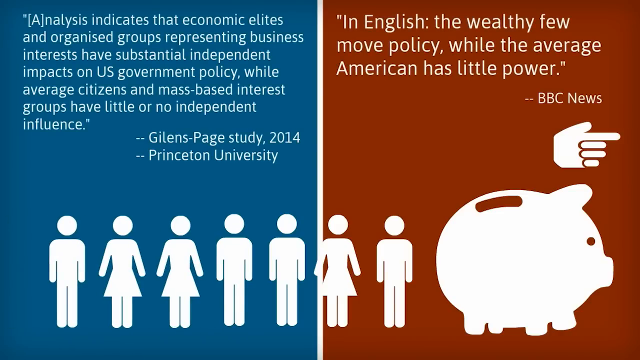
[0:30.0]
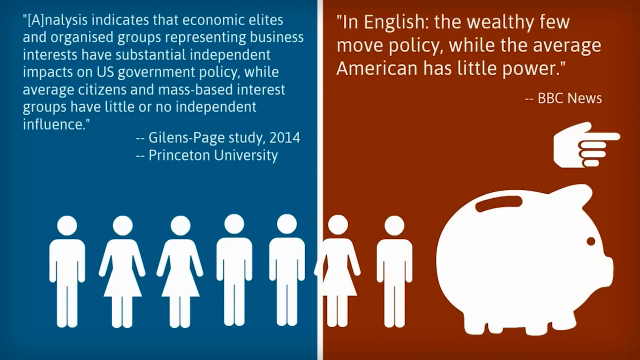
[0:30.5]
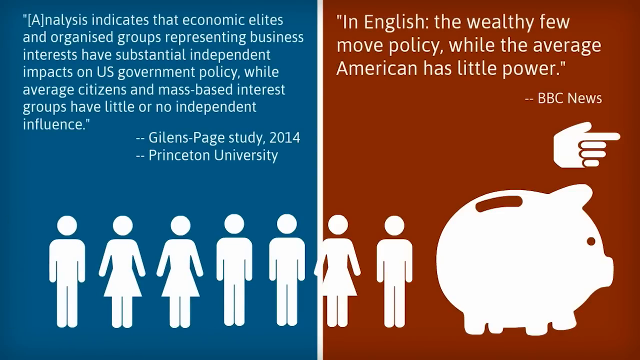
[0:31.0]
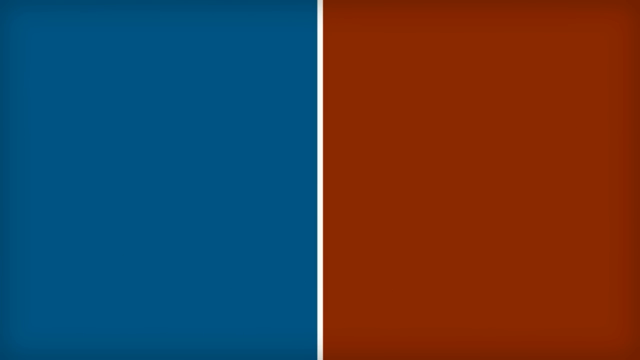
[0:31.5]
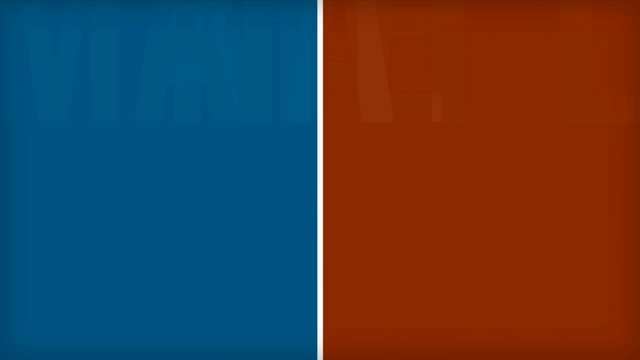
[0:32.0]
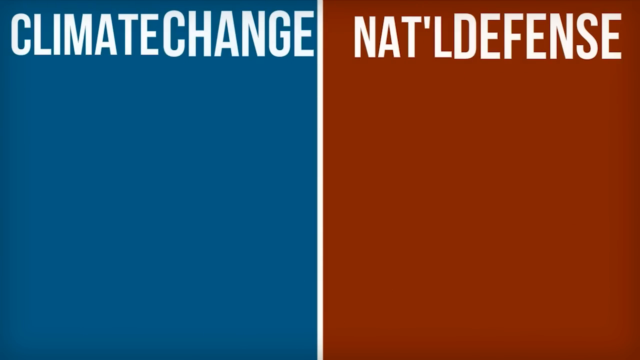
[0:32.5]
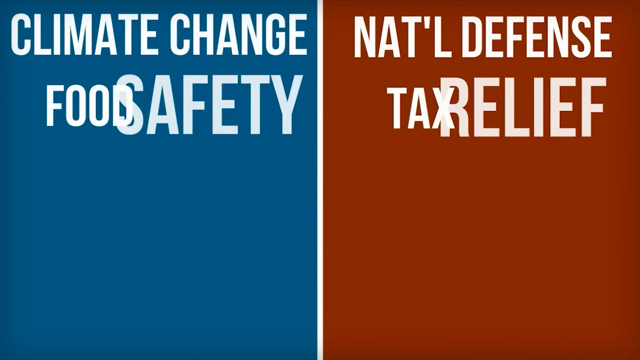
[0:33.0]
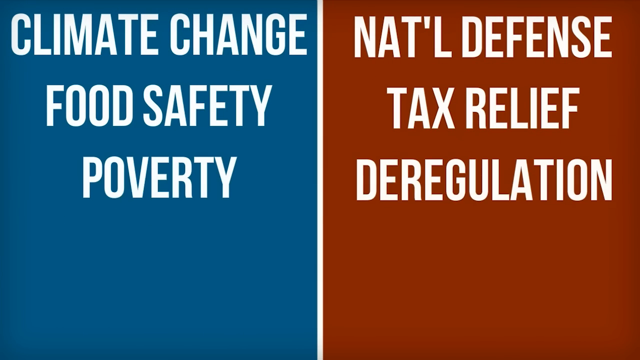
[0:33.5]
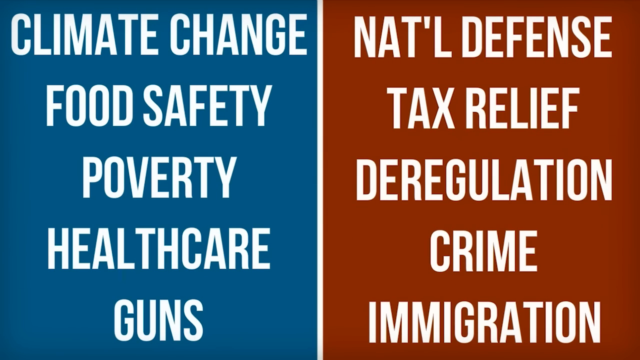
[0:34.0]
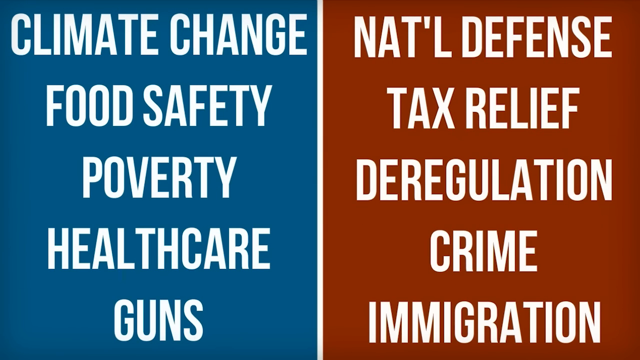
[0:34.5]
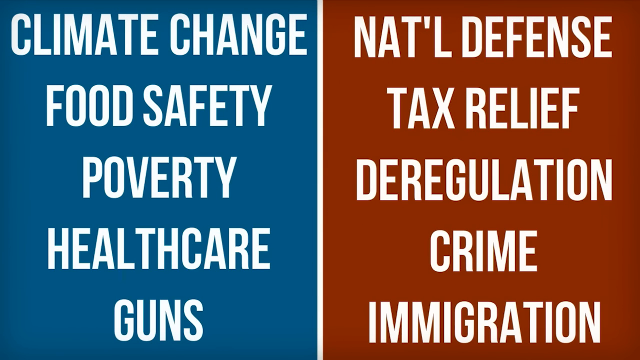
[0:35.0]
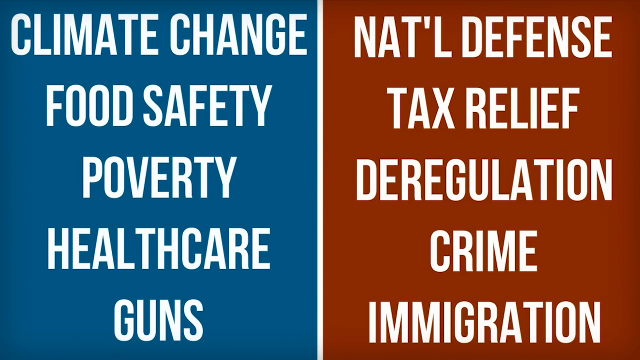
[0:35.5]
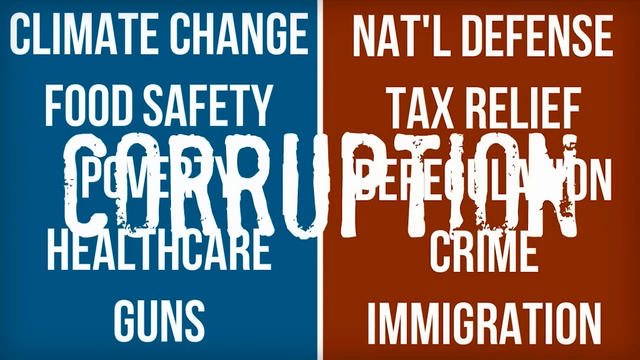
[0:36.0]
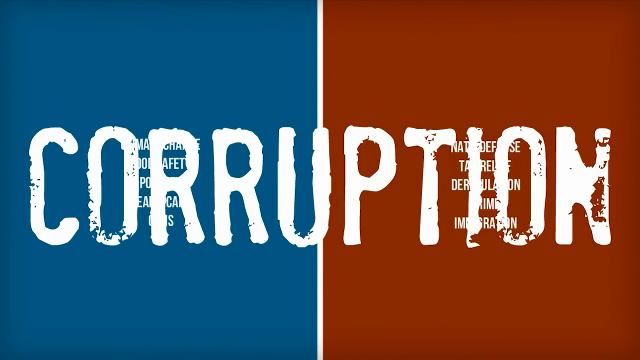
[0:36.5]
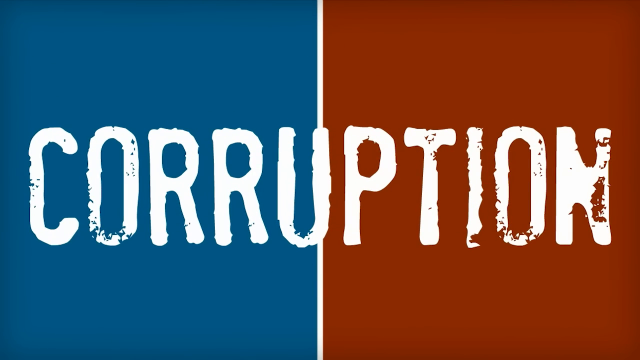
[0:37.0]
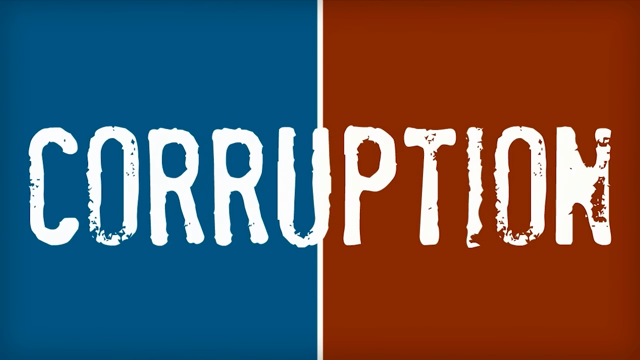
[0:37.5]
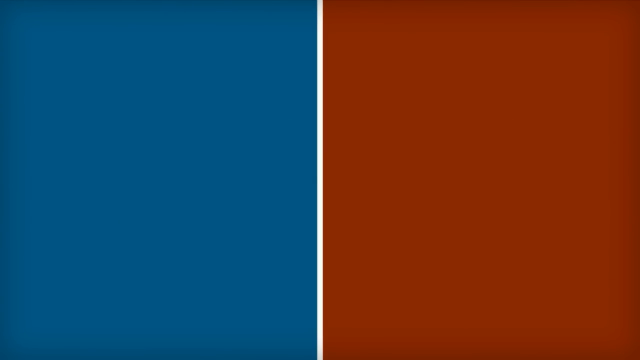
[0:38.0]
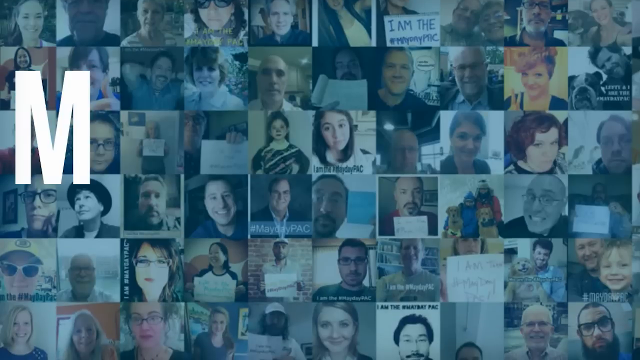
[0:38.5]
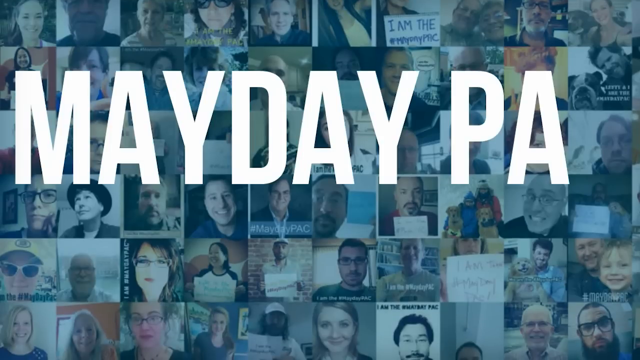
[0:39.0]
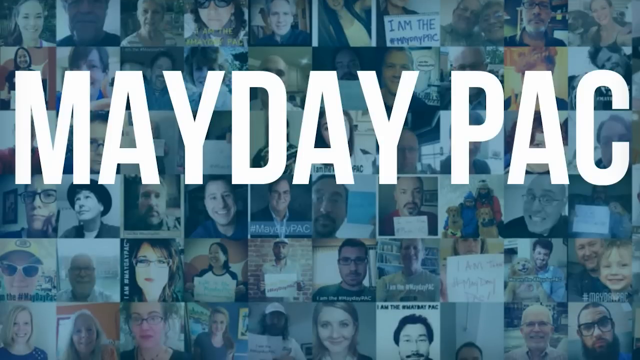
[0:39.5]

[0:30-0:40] The screen is in red and blue. Text reads "analysis indicate that economic elite and organized groups representing businesses interest have substantial independent impact on the USA government policy while average citizens and mass-based interest groups have little or no independent influence," credited to a 2014 study from Princeton University. On the right side, English text says "the wealthy few move policy" and that "the average American have little power," credited to BBC News. Across the red and blue sides, lists of issues appear: climate change, food safety, poverty, health care and guns, with corruption marked as the most important one; another list shows crime, immigration, deregulation, tax relief, defense and corruption. The words "mayday" and "Mayday PAC" appear.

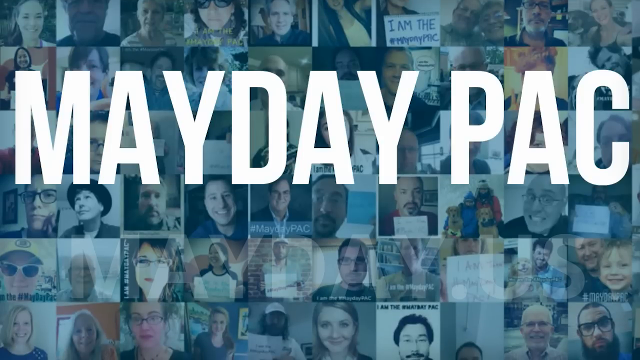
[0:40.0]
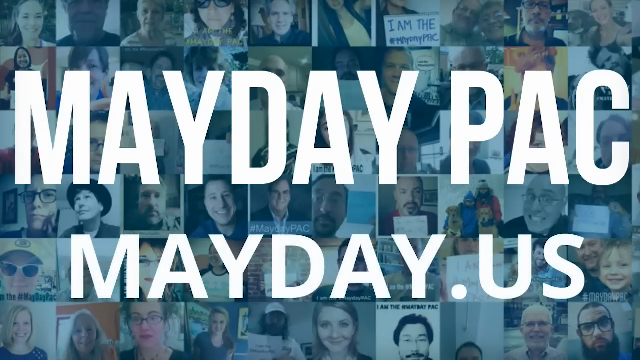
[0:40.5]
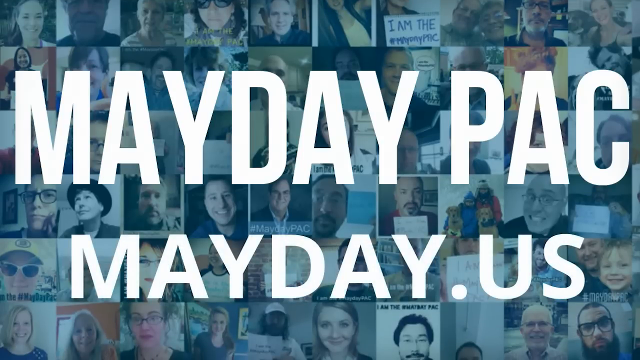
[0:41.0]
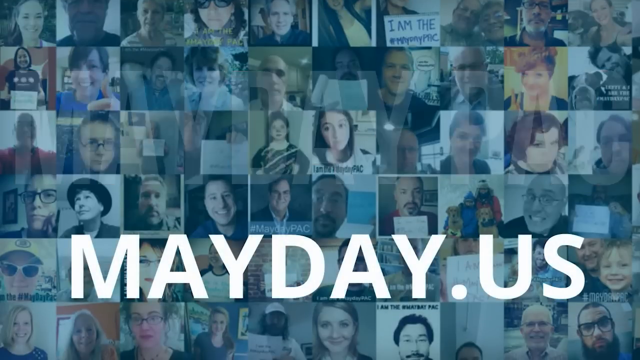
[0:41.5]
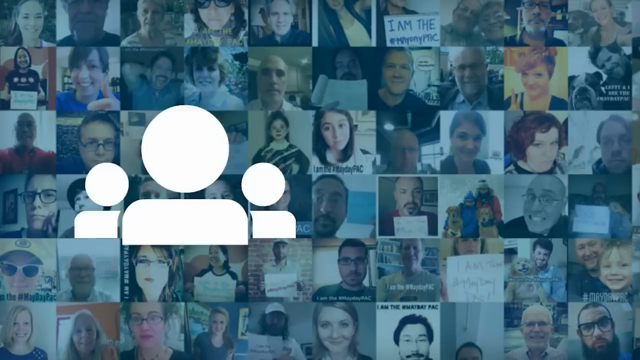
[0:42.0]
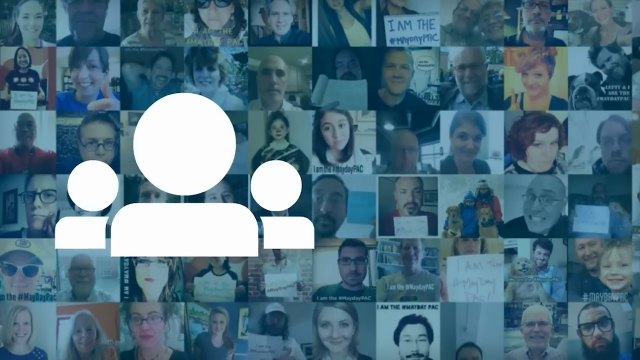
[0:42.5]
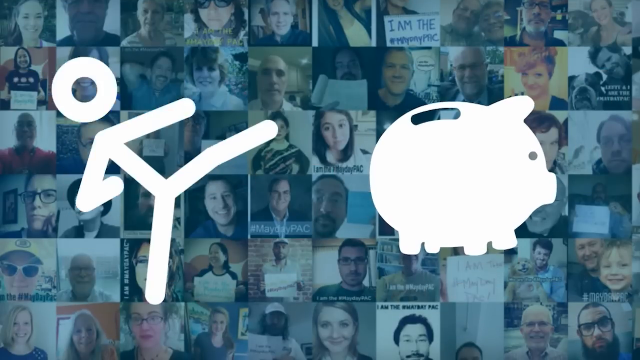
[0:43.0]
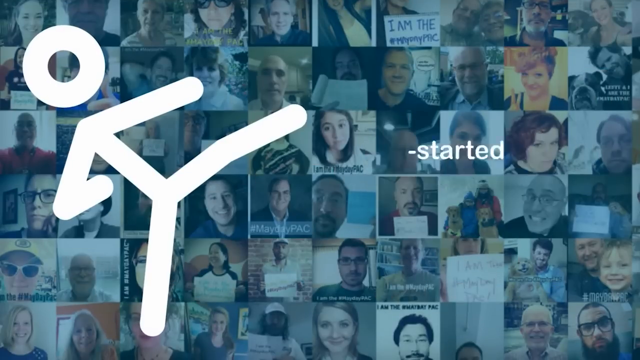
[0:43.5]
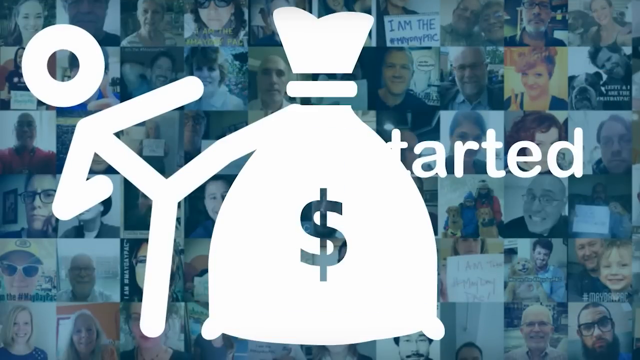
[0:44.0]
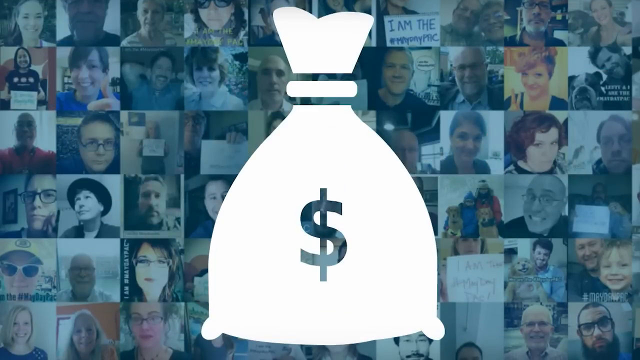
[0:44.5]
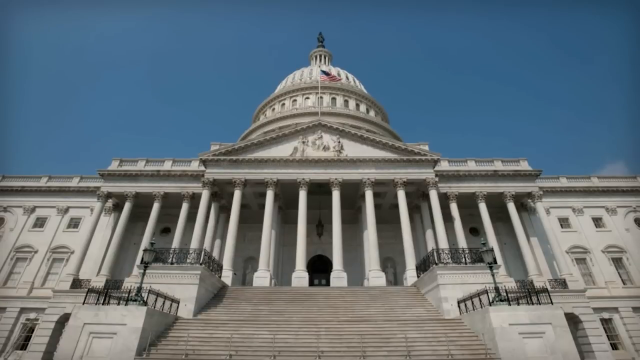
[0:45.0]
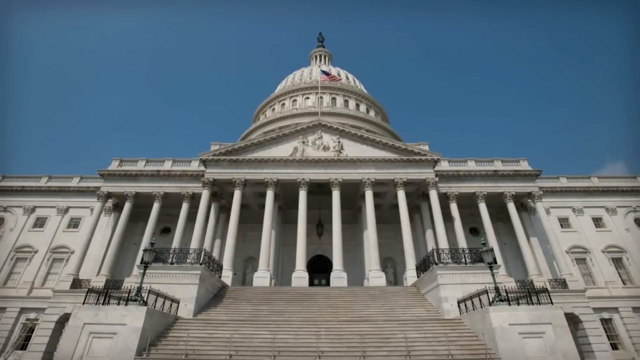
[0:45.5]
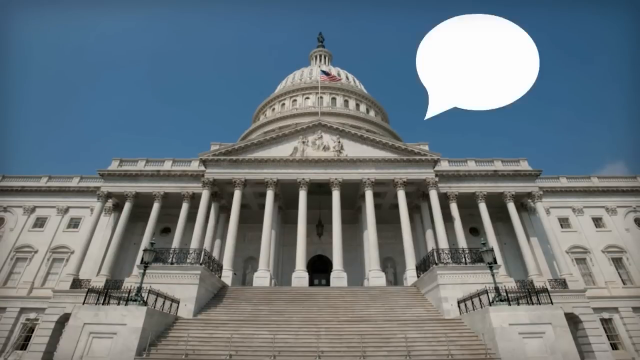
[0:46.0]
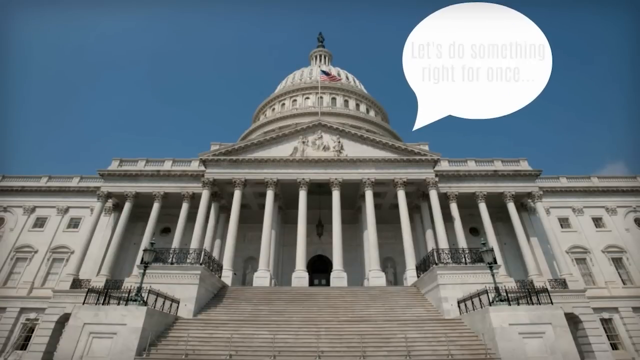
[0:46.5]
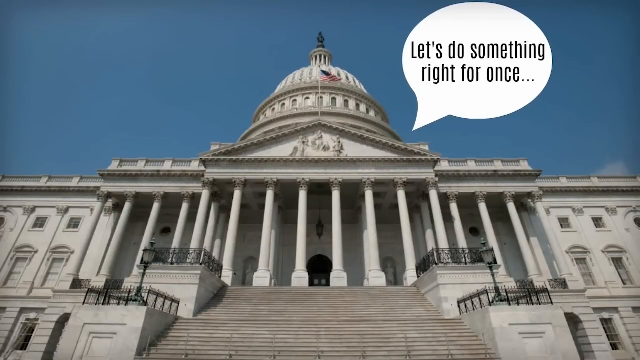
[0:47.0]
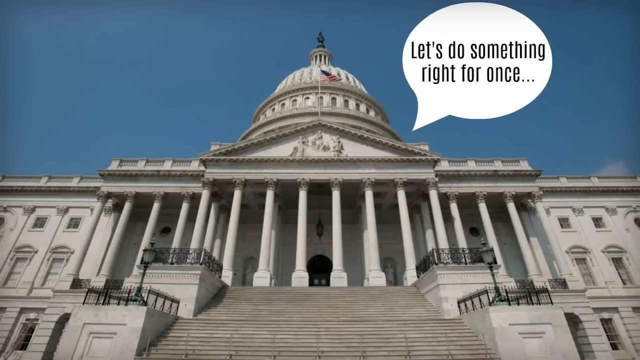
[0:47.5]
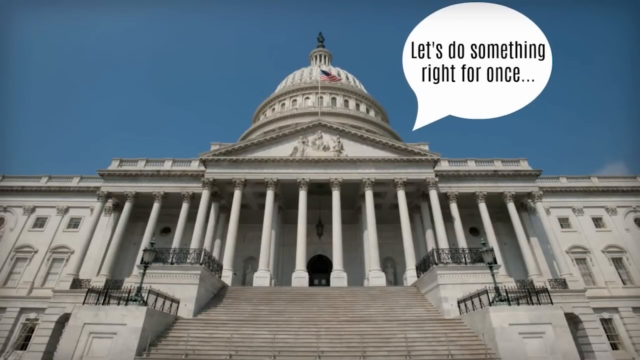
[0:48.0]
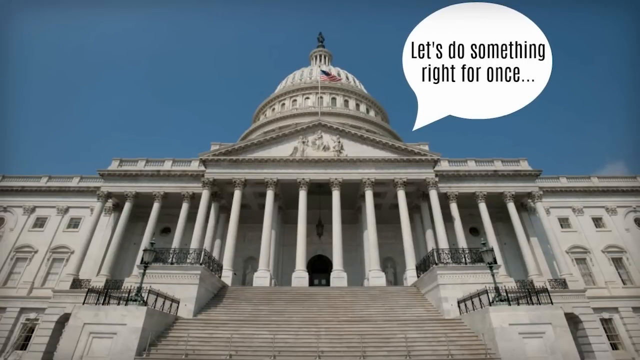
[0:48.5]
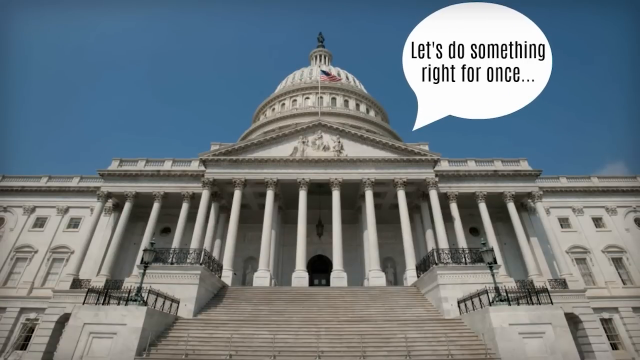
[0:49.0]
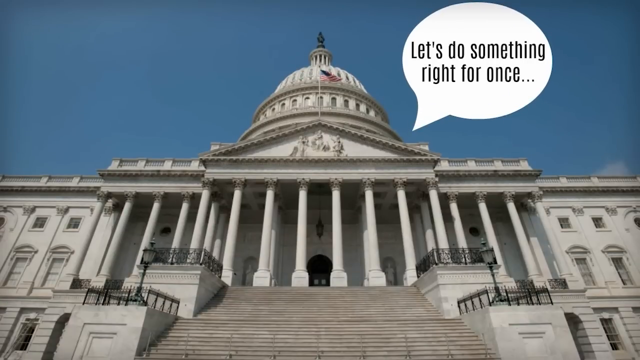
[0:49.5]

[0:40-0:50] Text reads "PAC Mayday," then "PAC Mayday USA." People are shown kicking money, and then text says "let's do something about it," followed by "Mayday PAC" and "Mayday.USA." The White House is shown saying "let's do it right this time." Behind the Mayday PAC and Mayday USA text are different people who look like U.S. citizens, kicking money. People are voting in front and behind, and they come from different cultural backgrounds and ethnicities. The White House is shown saying "let's do it right once," and then different sites where people can go to vote are shown. The White House appears with text reading "the citizen funded kickstart super PAC to end all super PACs" and "visit https://maydayusa.org to learn more." Then the text "paid for by Mayday PAC with the support of the citizens like you. Not authorized by any candidates or candidates committees" appears along with www.maydayusa.org. It looks like a campaign for voting, and it seems very serious.